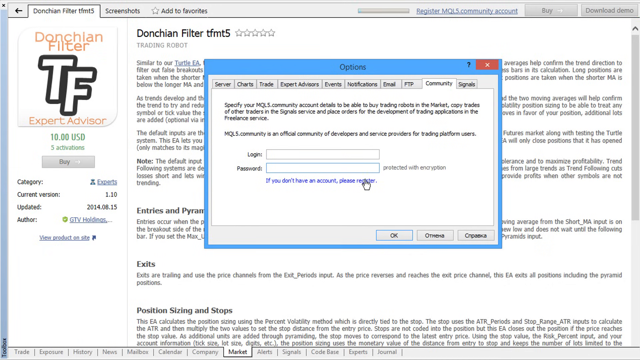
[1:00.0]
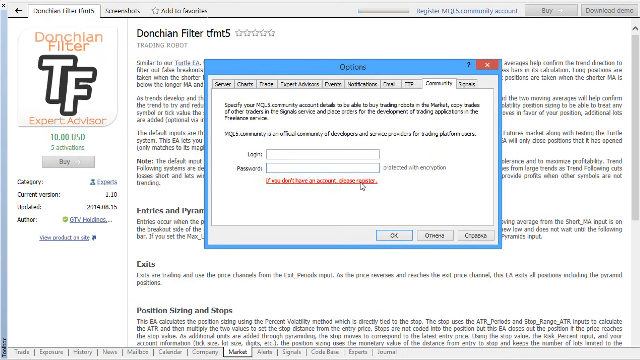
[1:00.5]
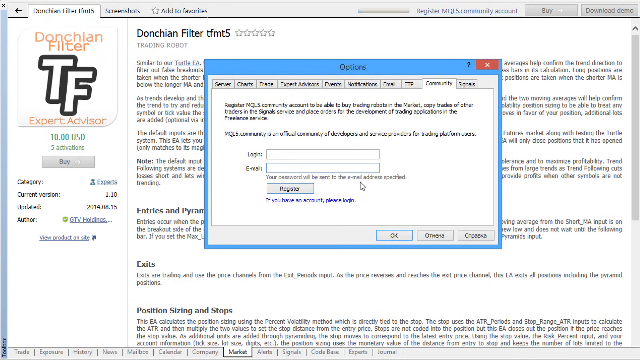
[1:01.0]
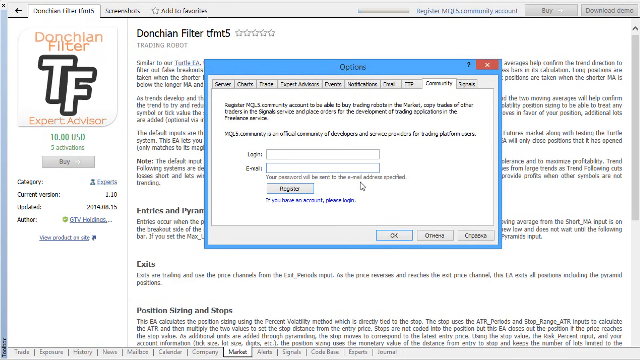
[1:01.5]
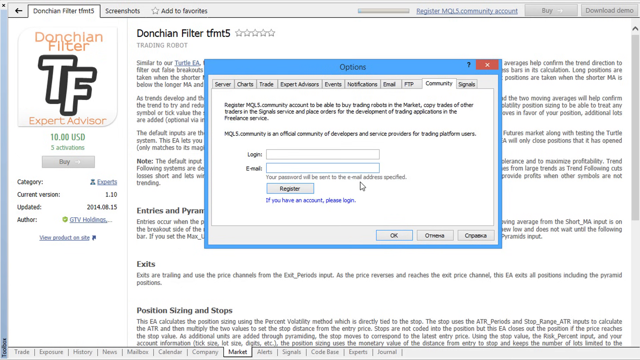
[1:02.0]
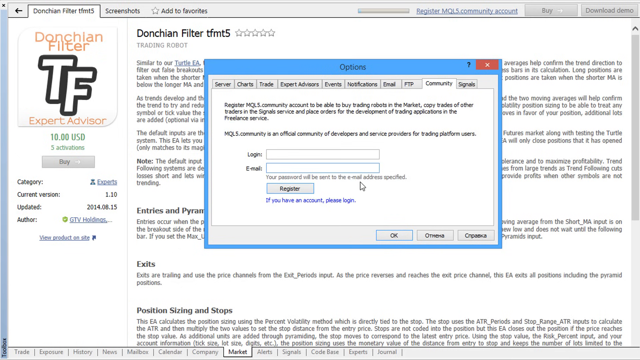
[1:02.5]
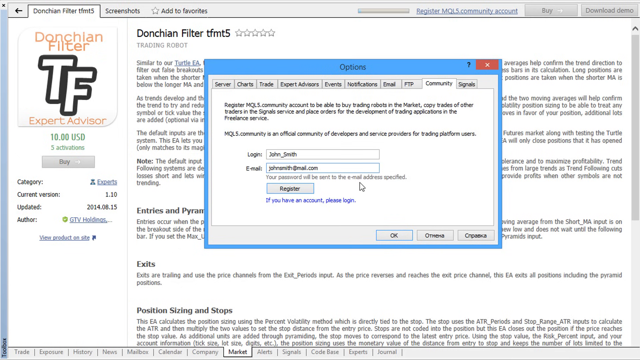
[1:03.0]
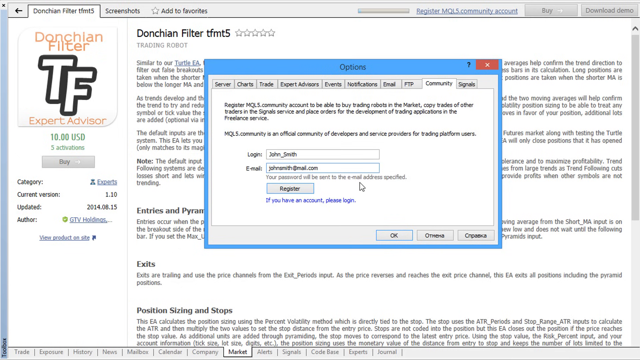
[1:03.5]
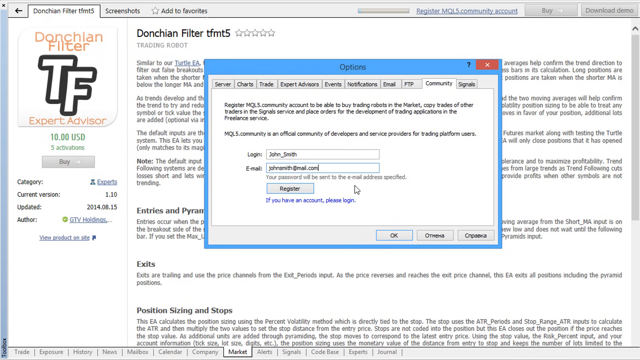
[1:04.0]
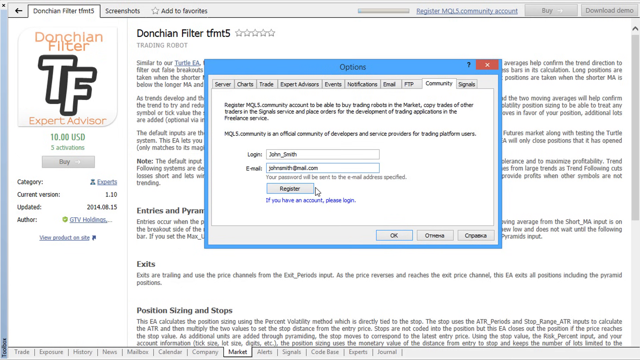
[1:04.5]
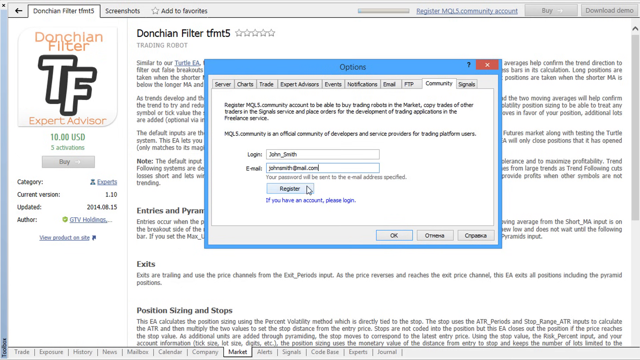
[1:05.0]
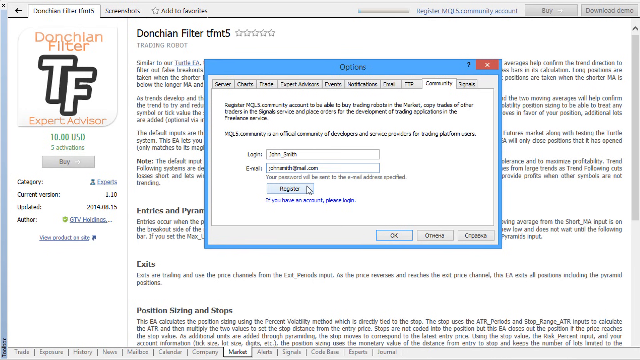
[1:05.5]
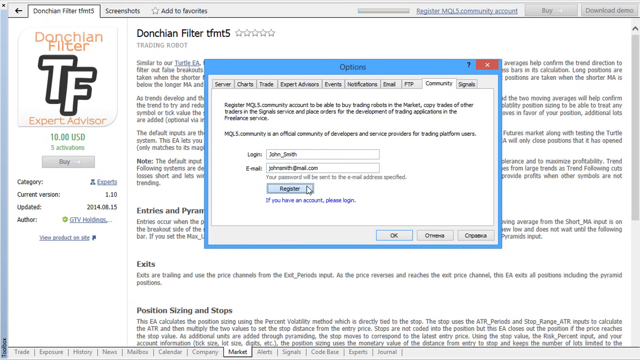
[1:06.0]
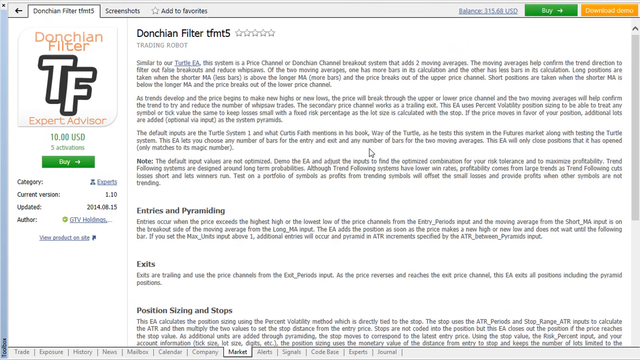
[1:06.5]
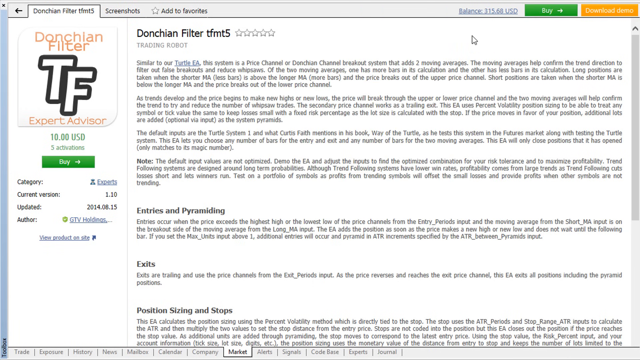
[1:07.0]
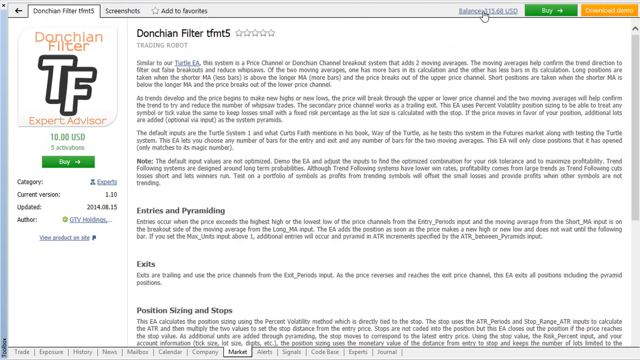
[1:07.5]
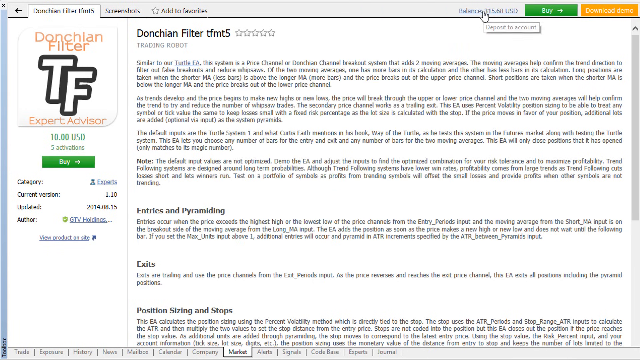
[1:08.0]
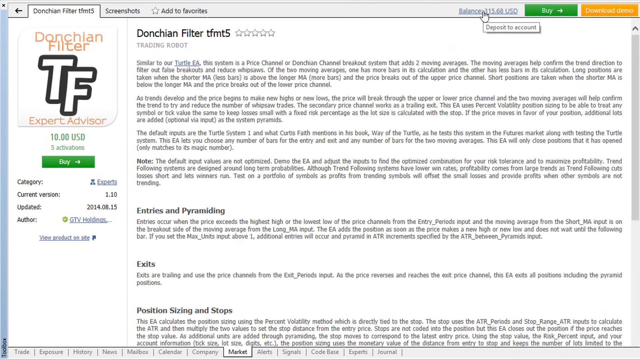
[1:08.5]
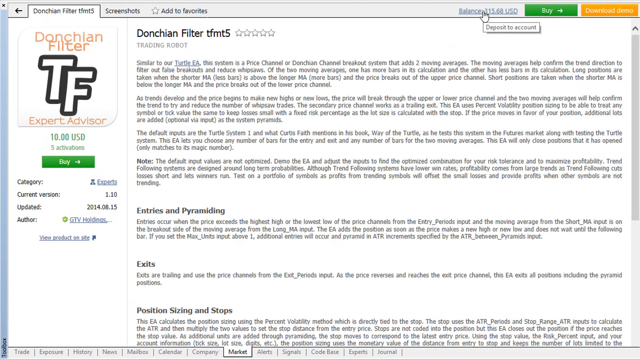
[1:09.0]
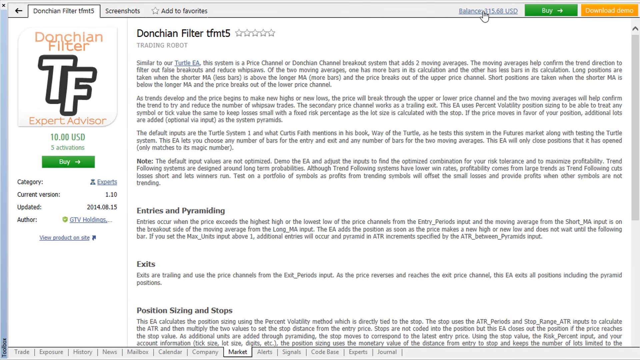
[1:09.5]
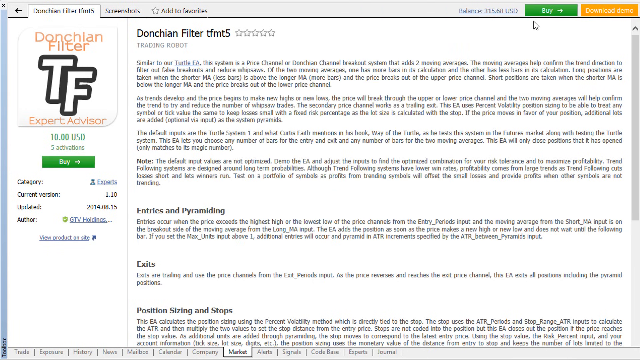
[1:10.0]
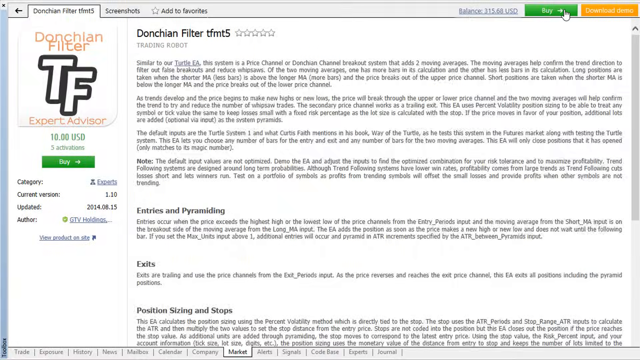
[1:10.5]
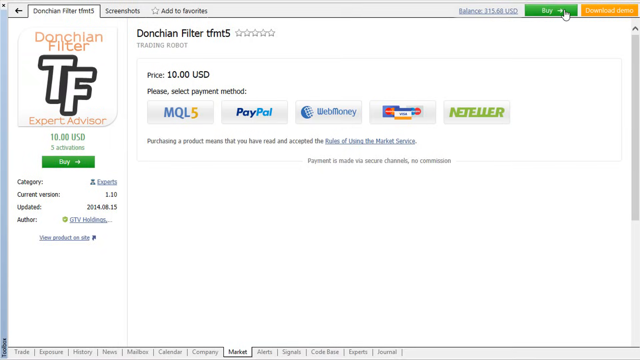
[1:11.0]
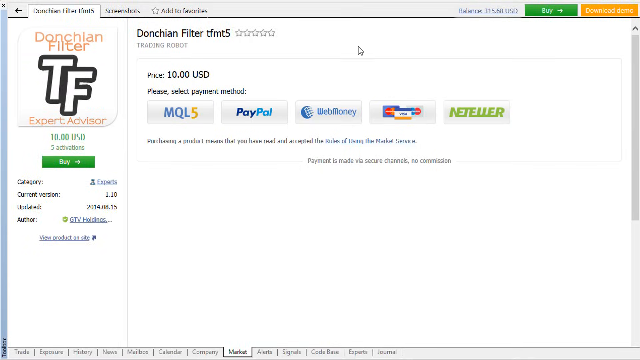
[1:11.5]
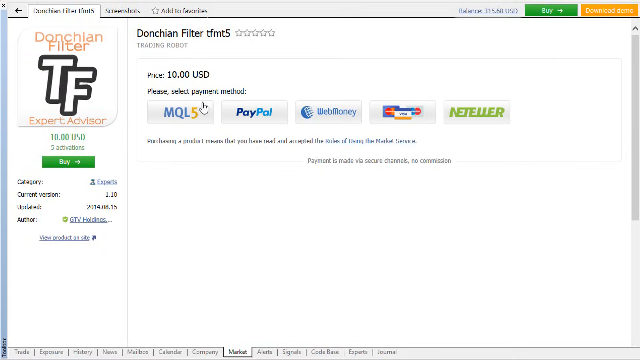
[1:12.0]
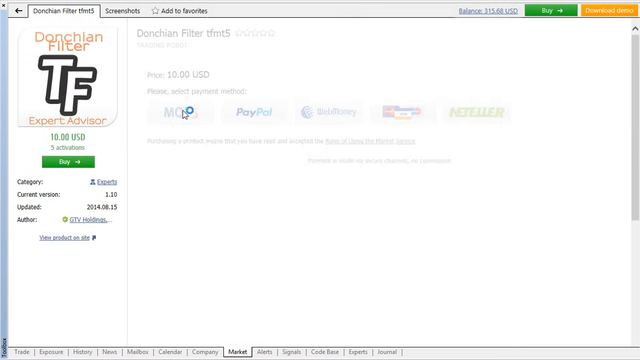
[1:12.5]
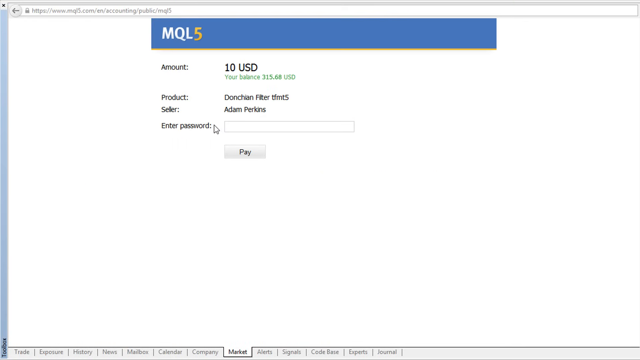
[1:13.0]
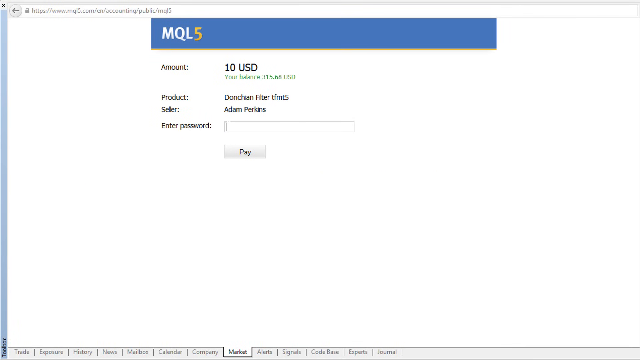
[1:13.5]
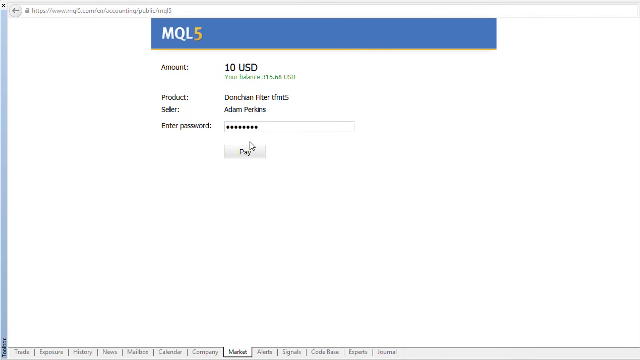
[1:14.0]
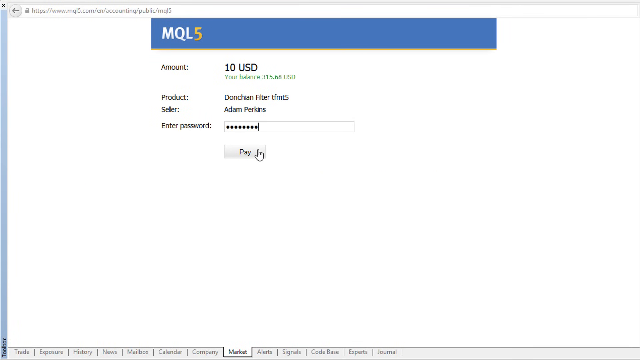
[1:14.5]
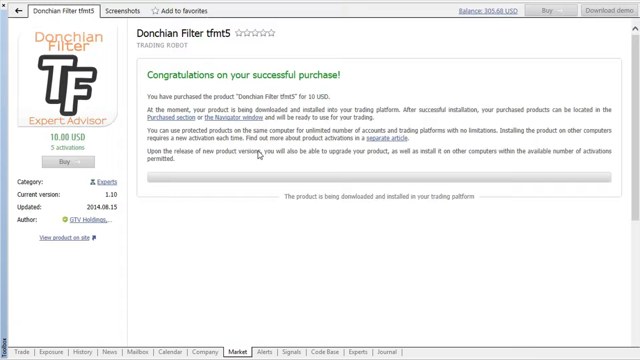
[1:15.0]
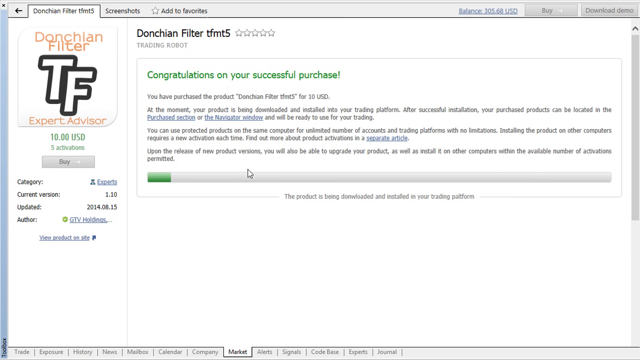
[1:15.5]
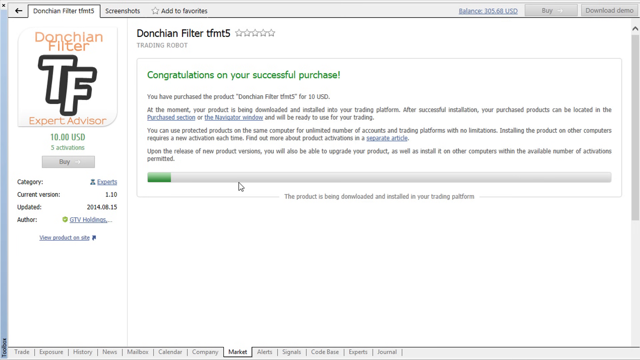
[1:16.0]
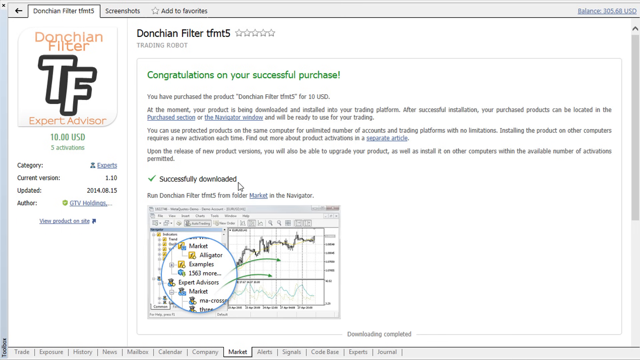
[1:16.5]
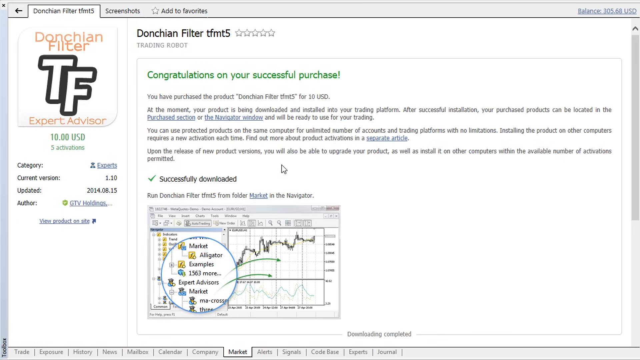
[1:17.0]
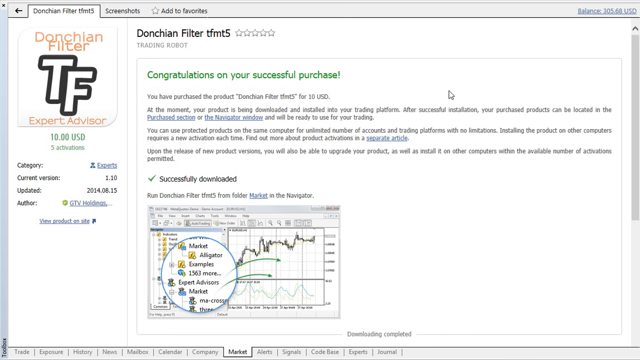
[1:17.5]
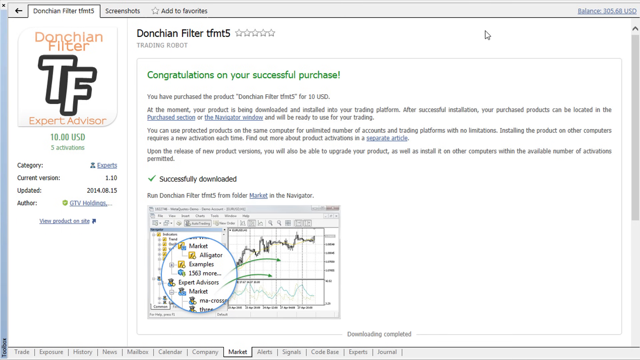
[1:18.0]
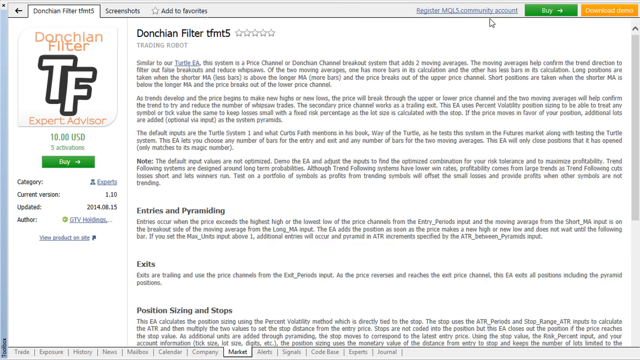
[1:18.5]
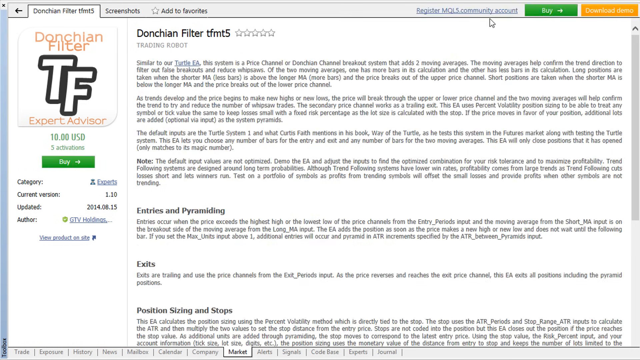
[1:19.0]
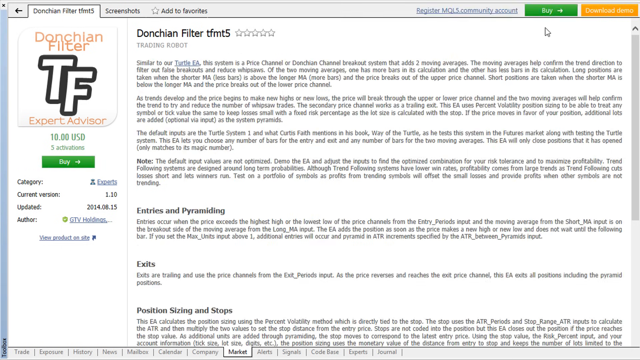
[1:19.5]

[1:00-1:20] A window in the middle is for entering a login and email and registering. A fake login and email are entered: john smith and johnsmith@mail.com. The mouse cursor clicks the register button and then goes up to the price in the top right corner, $315.68. A small note appears by the cursor saying "deposit to account". The buy button next to this amount is clicked, followed by an option that says "MQL5". A checkout screen appears, showing the book's amount as $10, the account balance of $315.68, the seller's name, Adam Perkins, and the product, the book Donchian Filter. A password is entered and the pay button is clicked. A confirmation of the purchase appears, titled "congratulations on your successful purchase", and it shows the book was successfully downloaded.